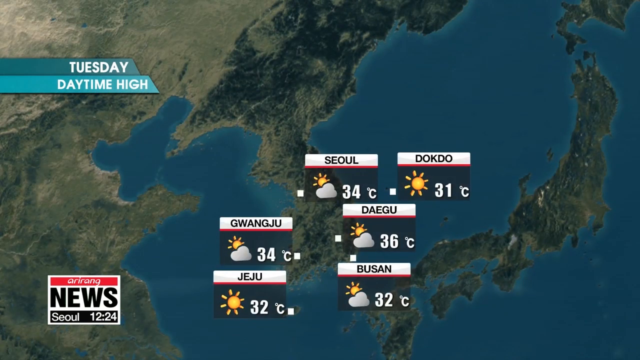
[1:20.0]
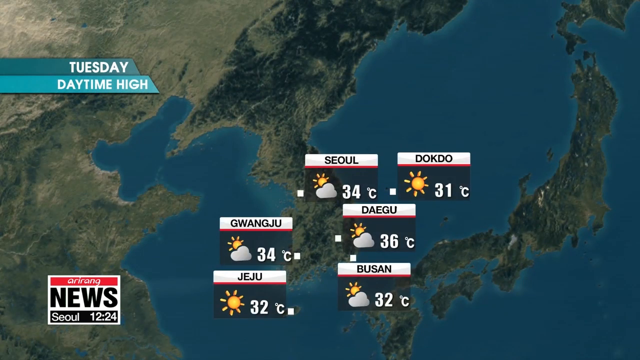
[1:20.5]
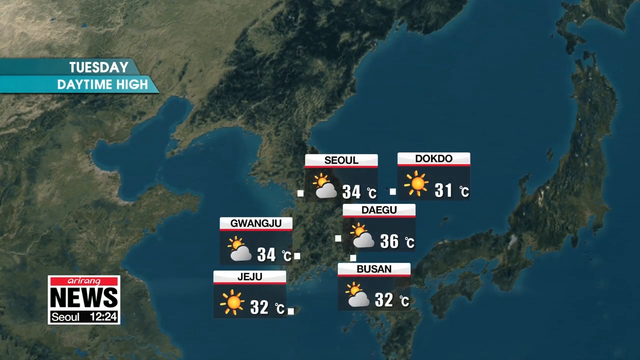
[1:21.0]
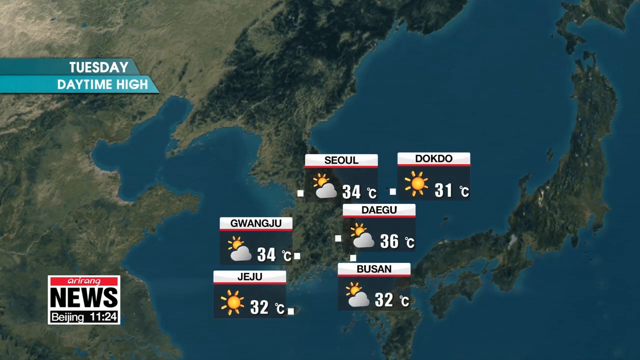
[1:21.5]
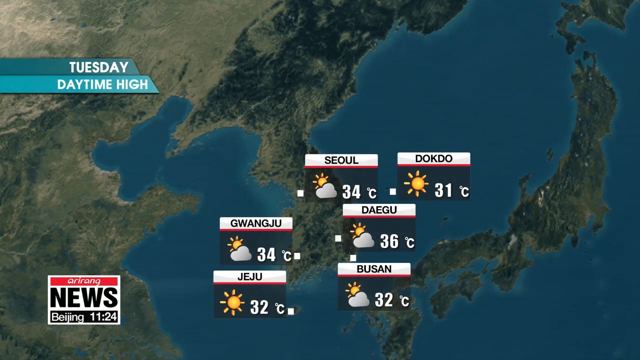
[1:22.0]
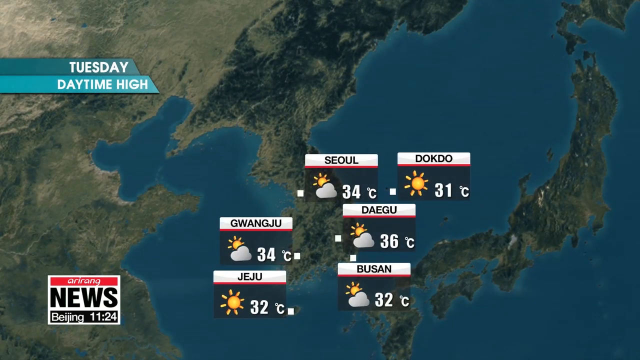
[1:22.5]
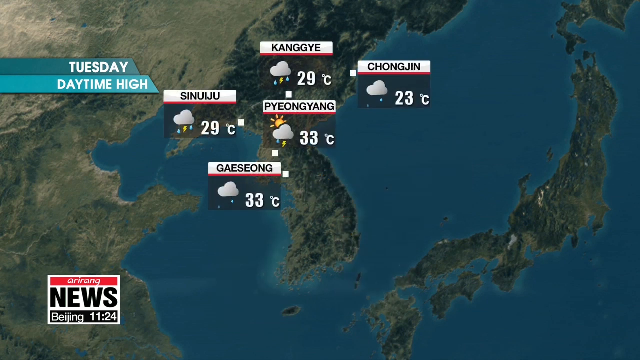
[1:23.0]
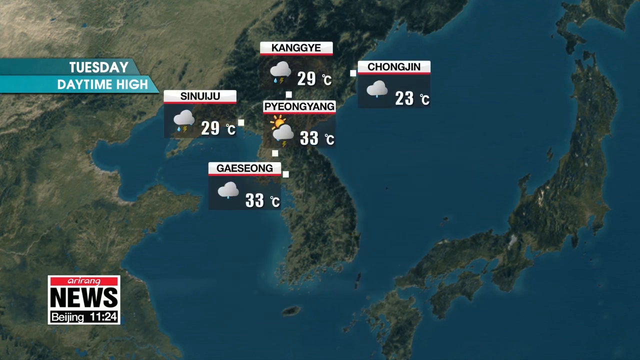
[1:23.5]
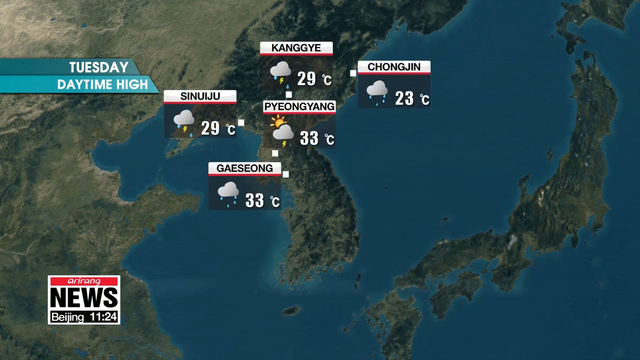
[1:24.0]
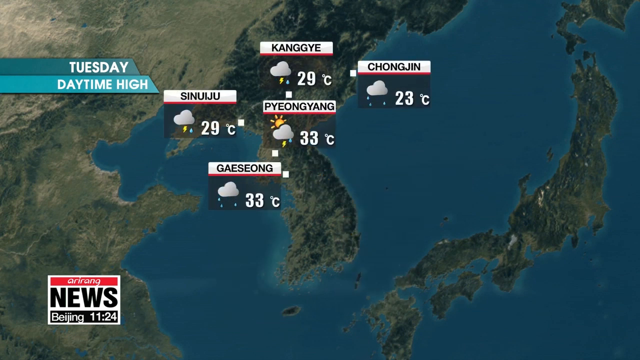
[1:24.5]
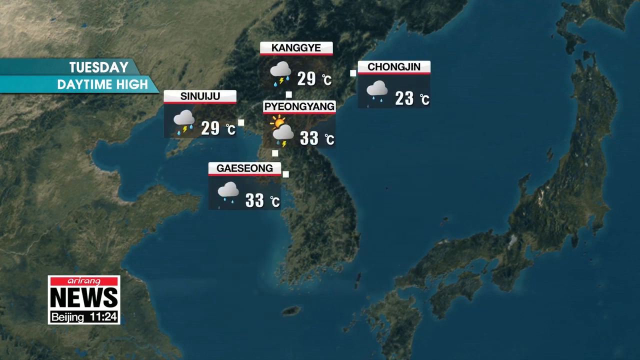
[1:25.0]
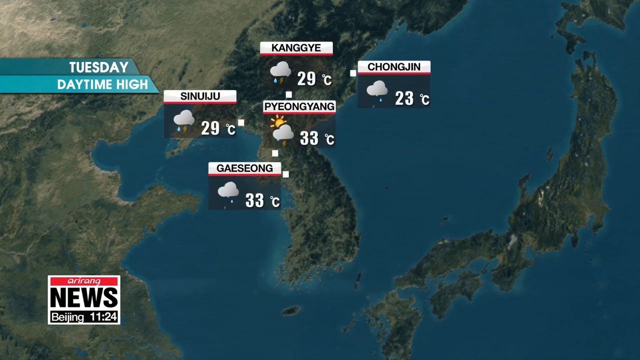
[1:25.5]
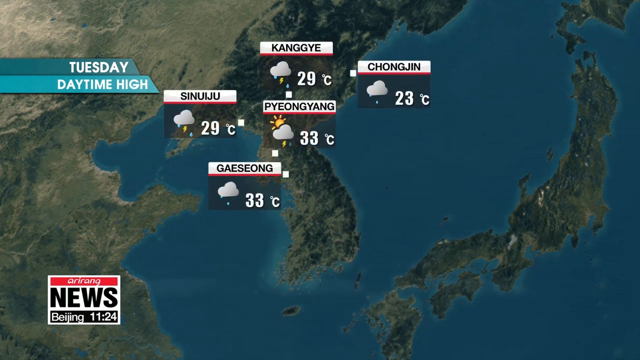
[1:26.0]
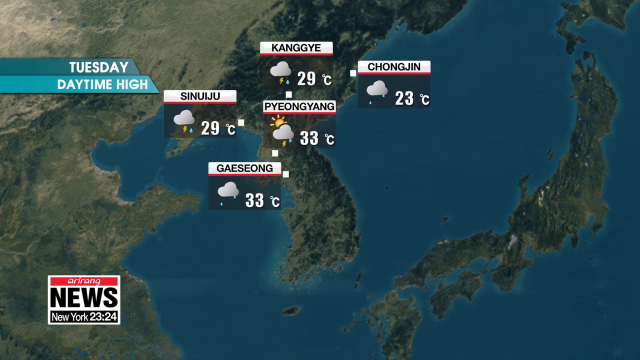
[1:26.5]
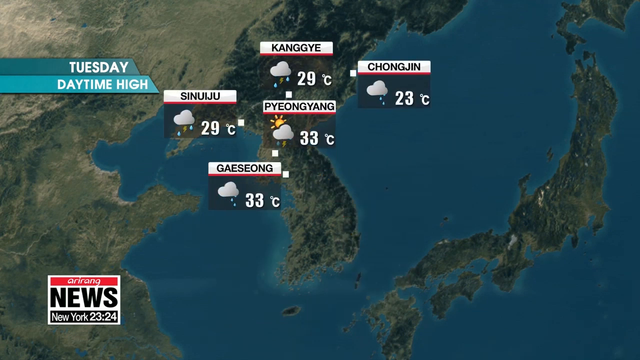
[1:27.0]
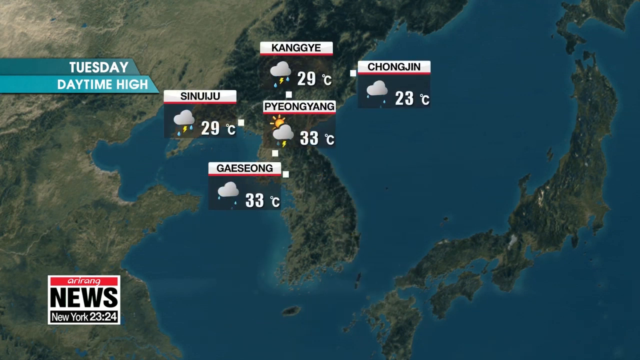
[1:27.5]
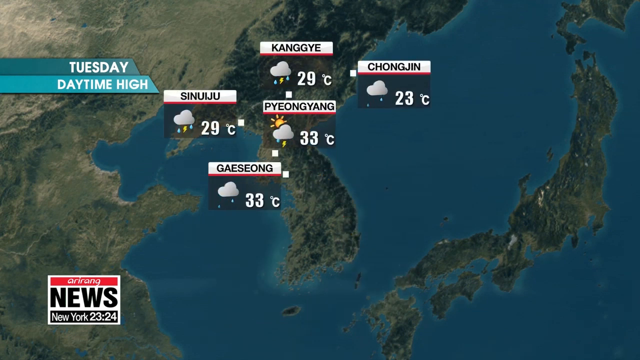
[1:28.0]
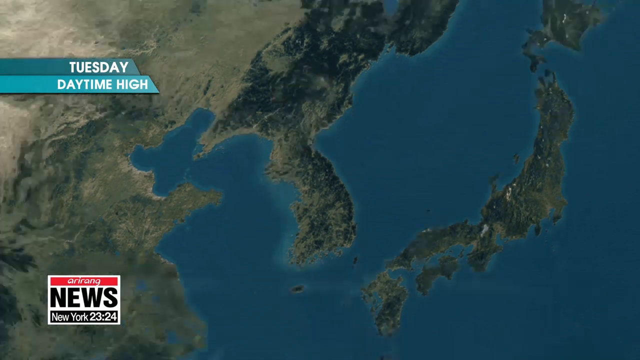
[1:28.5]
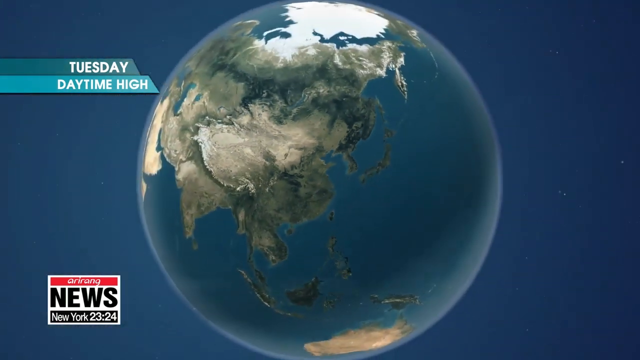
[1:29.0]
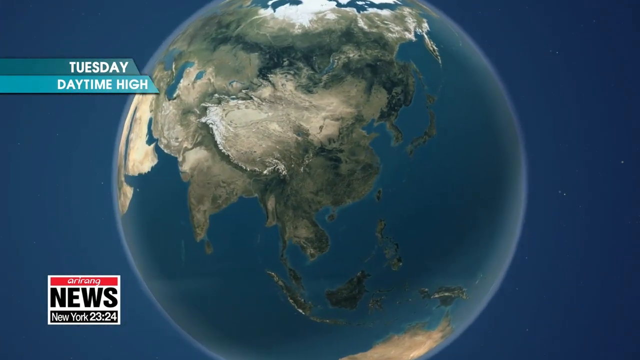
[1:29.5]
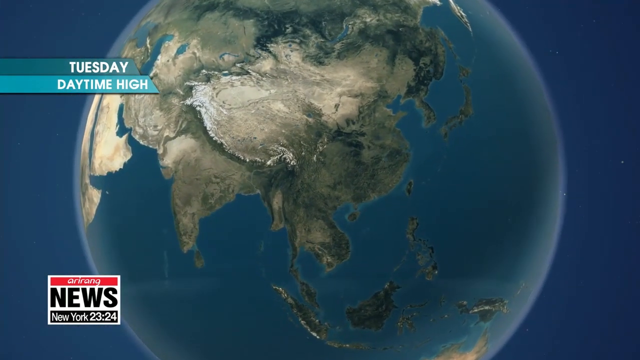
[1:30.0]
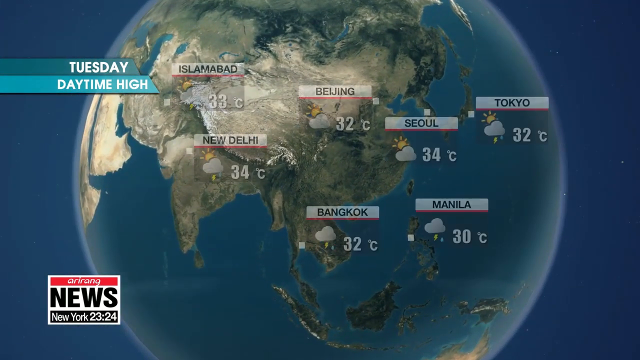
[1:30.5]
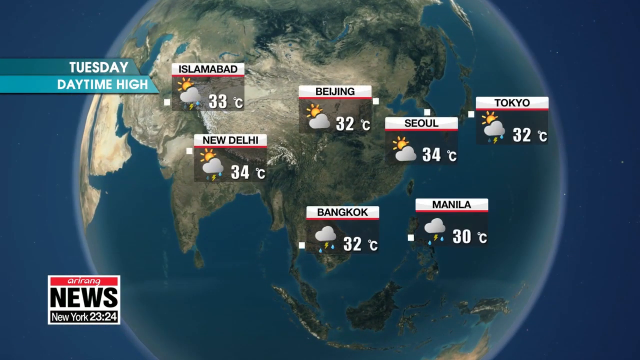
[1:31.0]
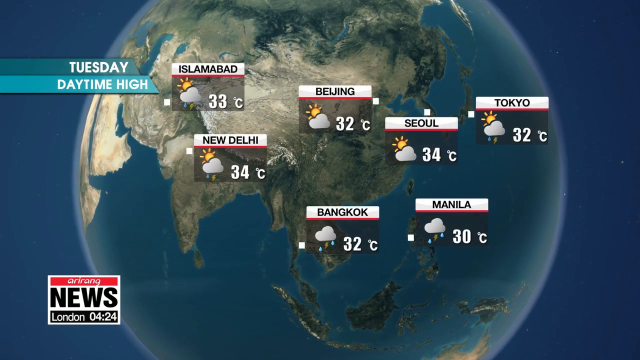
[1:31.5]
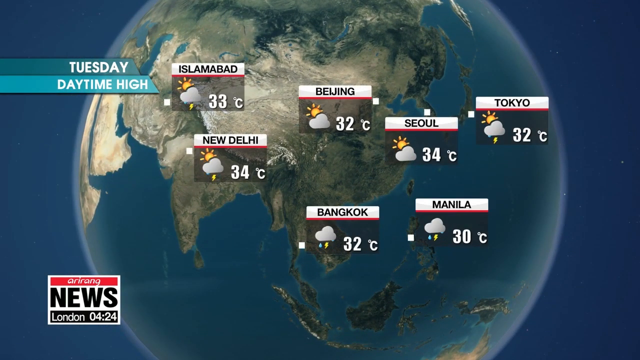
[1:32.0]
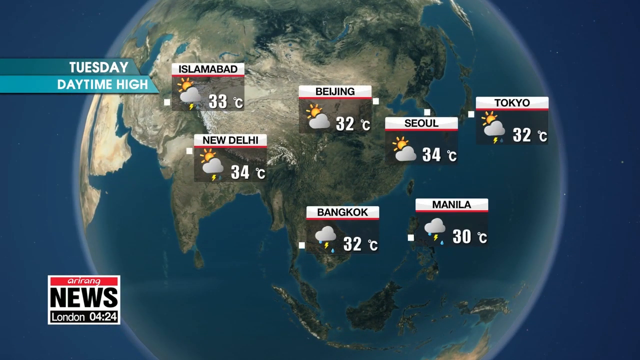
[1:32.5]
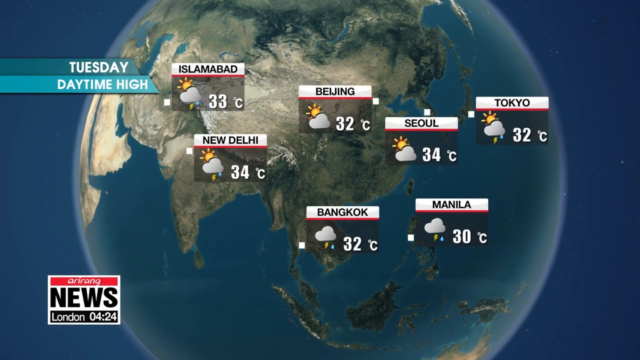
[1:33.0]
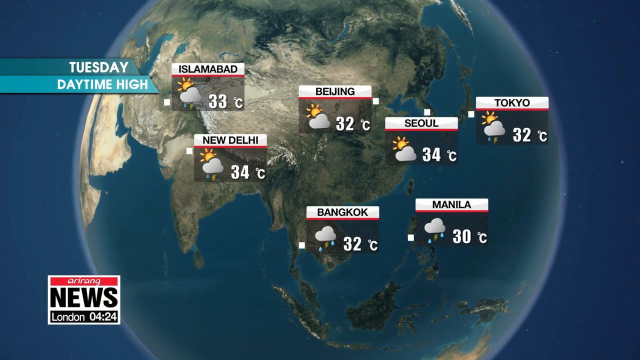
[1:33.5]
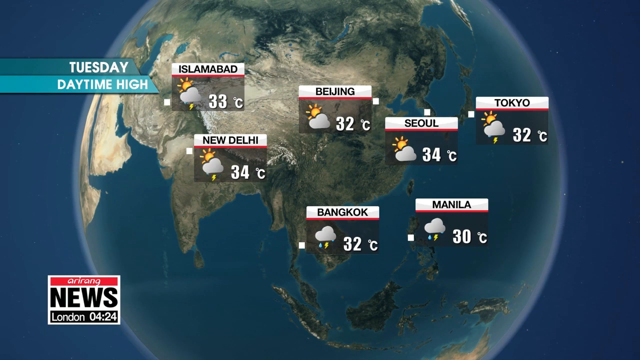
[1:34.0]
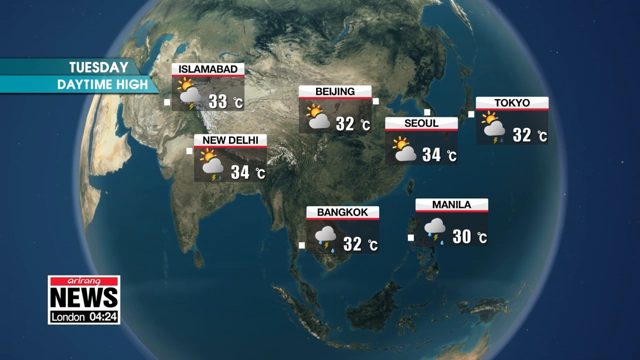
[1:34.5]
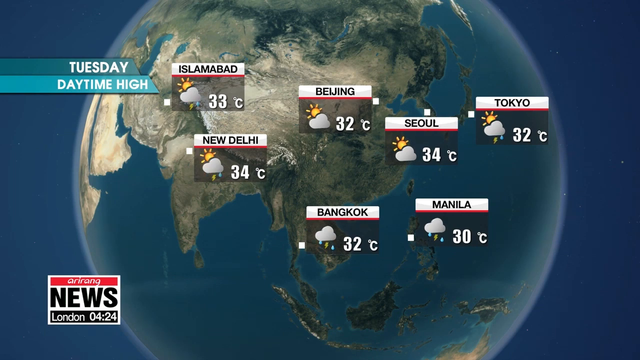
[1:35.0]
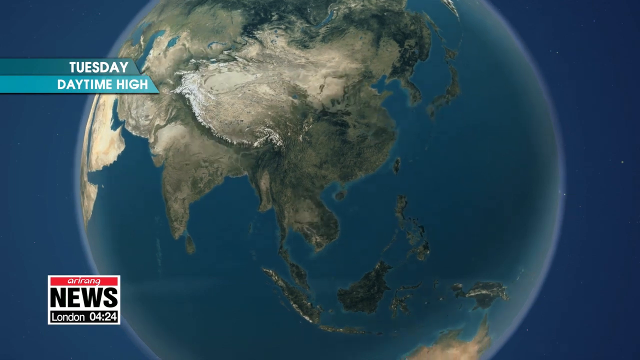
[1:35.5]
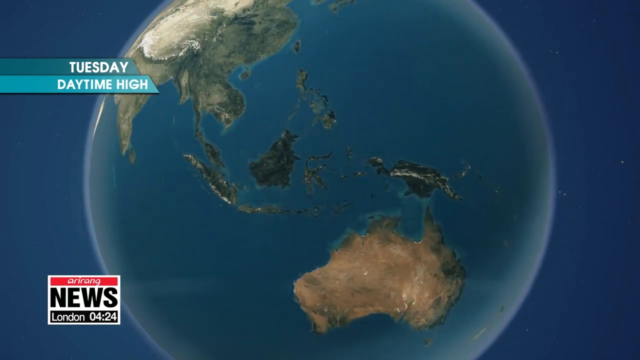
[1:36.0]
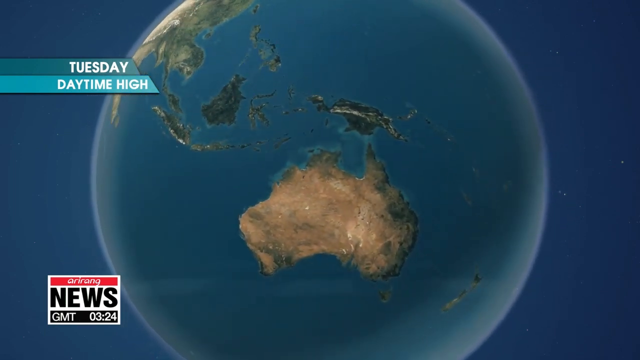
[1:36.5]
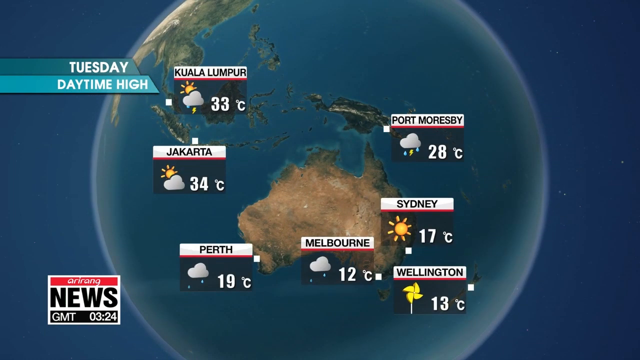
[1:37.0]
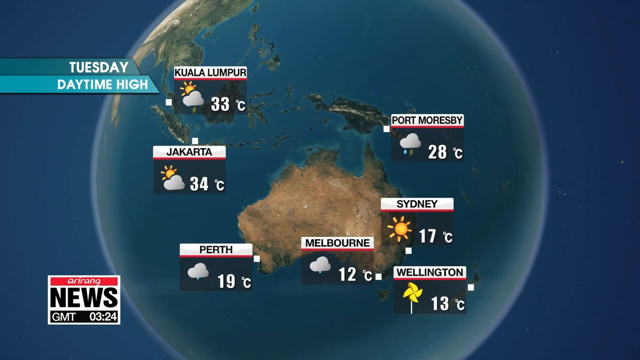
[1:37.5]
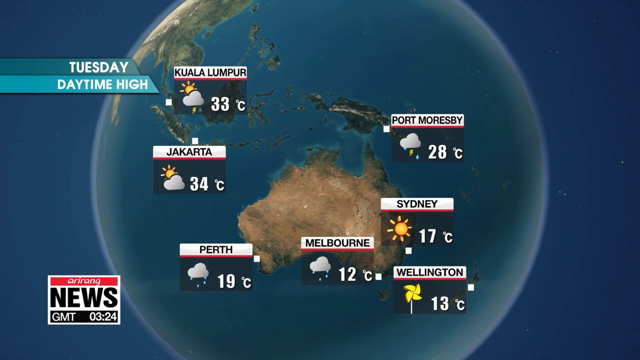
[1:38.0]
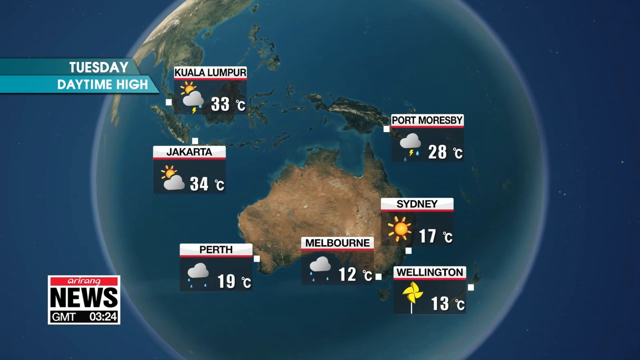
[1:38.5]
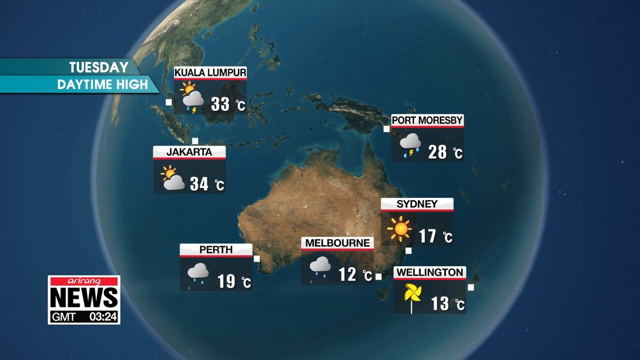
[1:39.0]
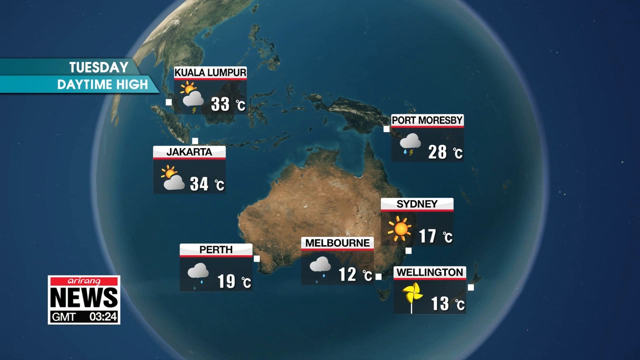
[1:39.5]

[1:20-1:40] The large map including South Korea and Japan remains on screen. In the upper left are two bars: the top one, dark teal, reads "Tuesday" in white, and directly beneath it a lighter teal bar reads "daytime high". In the lower left corner is a news icon with a red bar at the top and a white bar in the middle where "news" appears in black. Below that, a black bar with white font scrolls through a world clock showing Beijing and New York. The globe then moves out and back, revealing temperatures for Islamabad, New Delhi, Bangkok, Beijing, Seoul, Manila and Tokyo. Each city's icon includes the temperature and the daytime conditions, whether sunny, partly cloudy or rainy. The globe turns again to a different section and stops with Australia centered, and in the lower portion of the screen temperatures appear for Kuala Lumpur, Jakarta, Perth, Melbourne, Wellington, Sydney and Port Moseby.